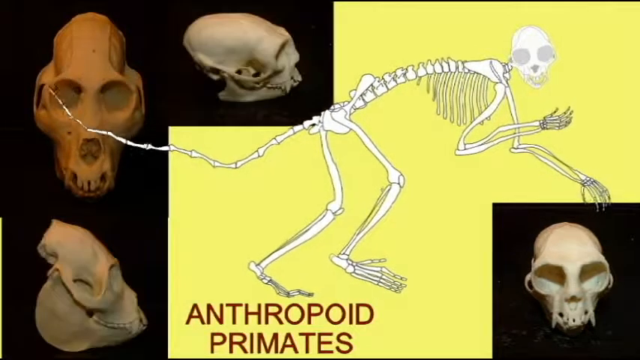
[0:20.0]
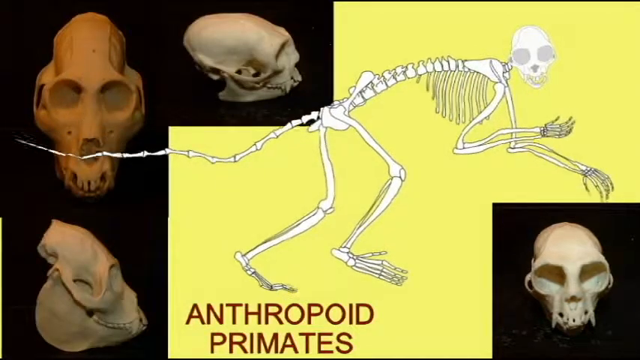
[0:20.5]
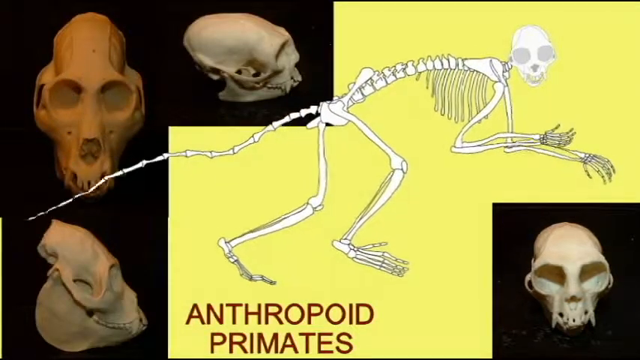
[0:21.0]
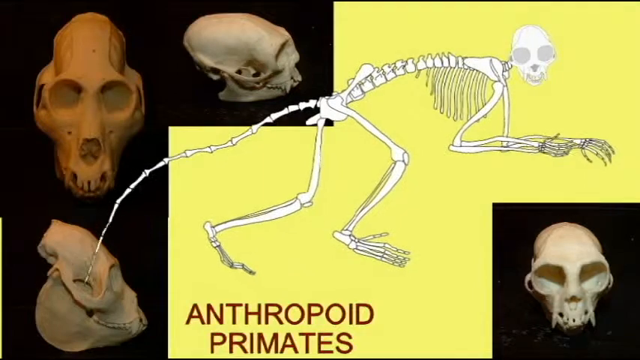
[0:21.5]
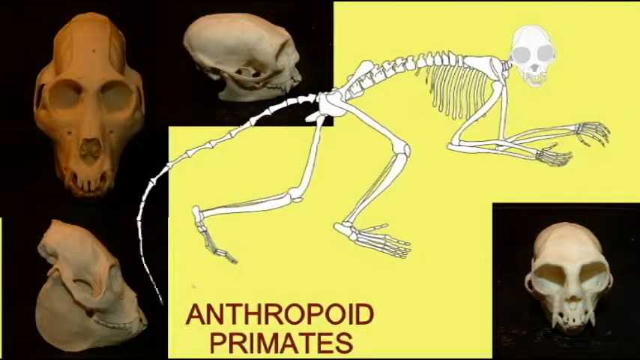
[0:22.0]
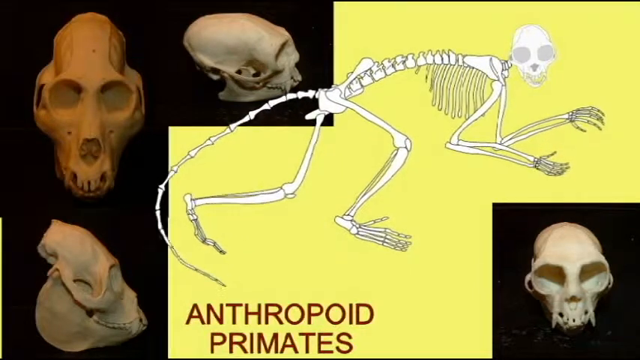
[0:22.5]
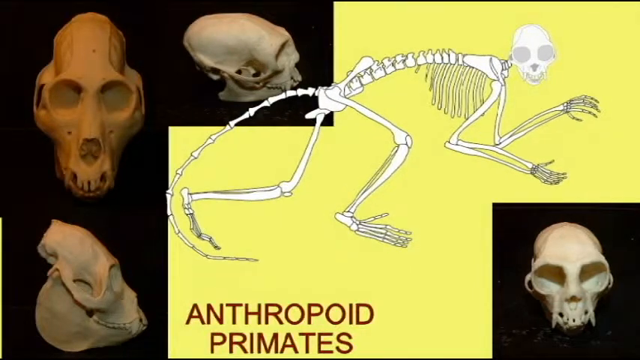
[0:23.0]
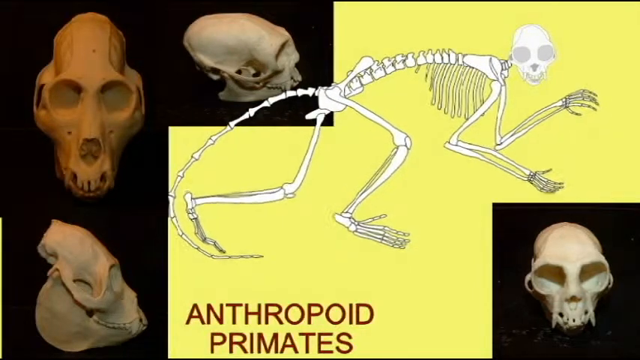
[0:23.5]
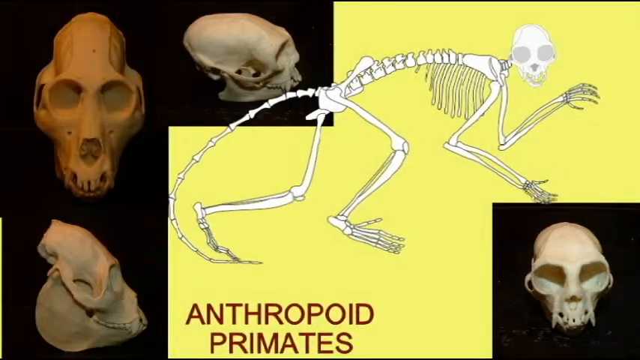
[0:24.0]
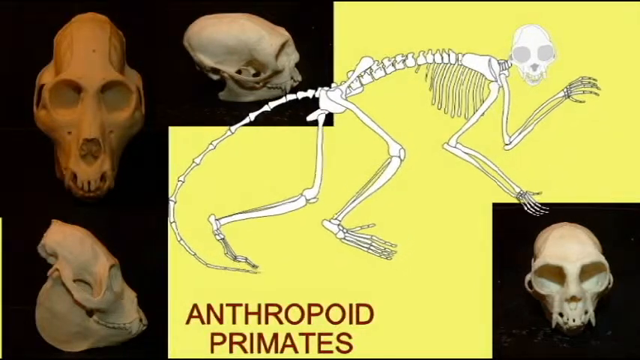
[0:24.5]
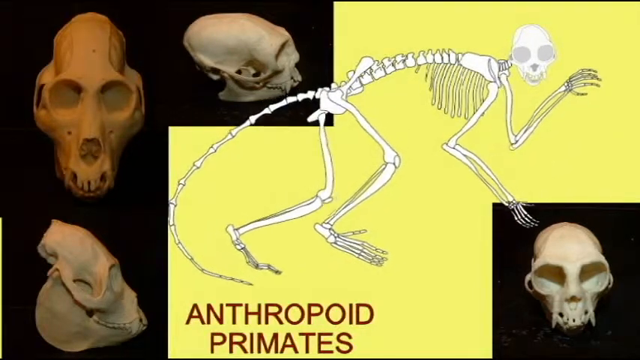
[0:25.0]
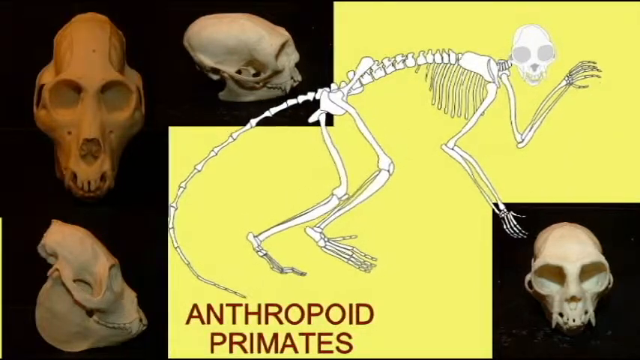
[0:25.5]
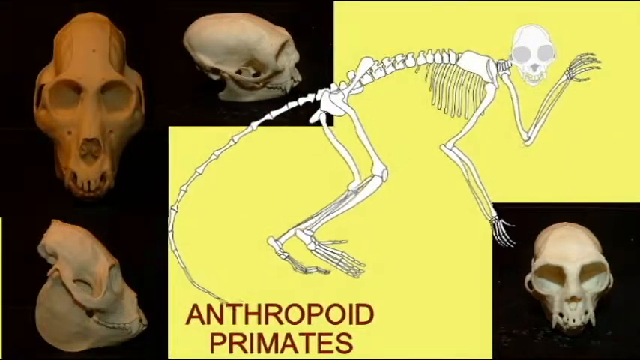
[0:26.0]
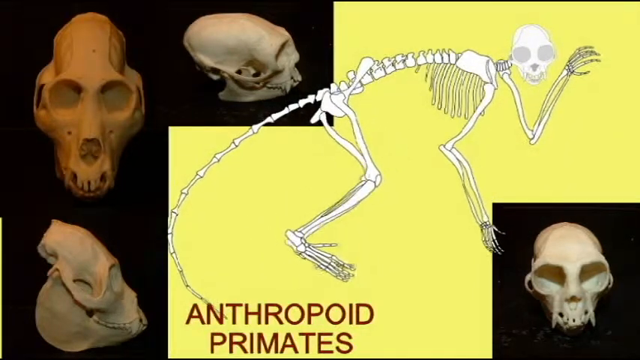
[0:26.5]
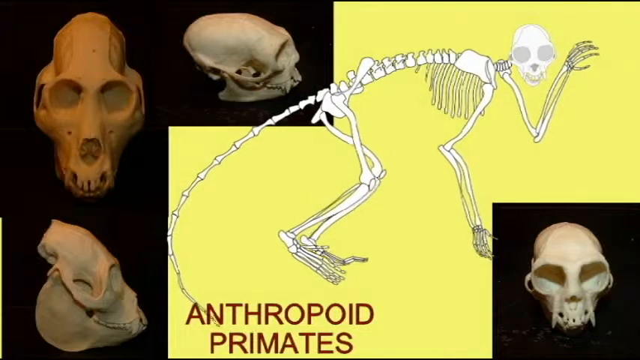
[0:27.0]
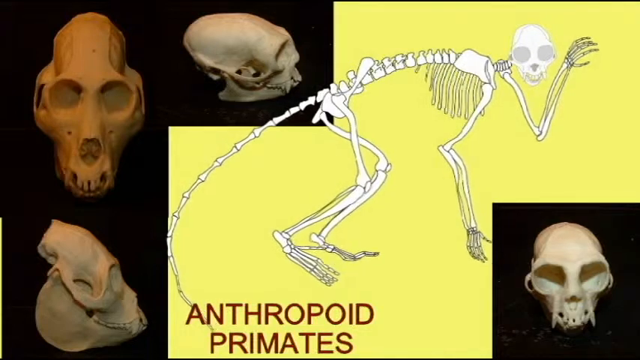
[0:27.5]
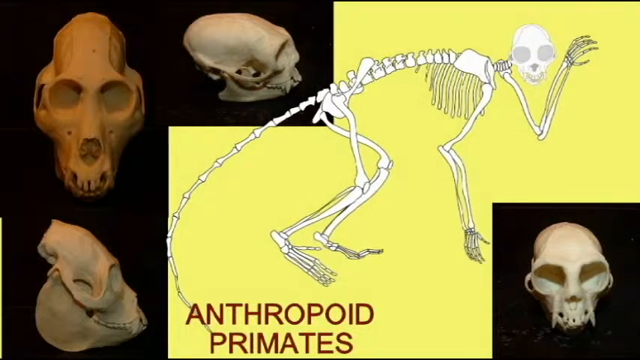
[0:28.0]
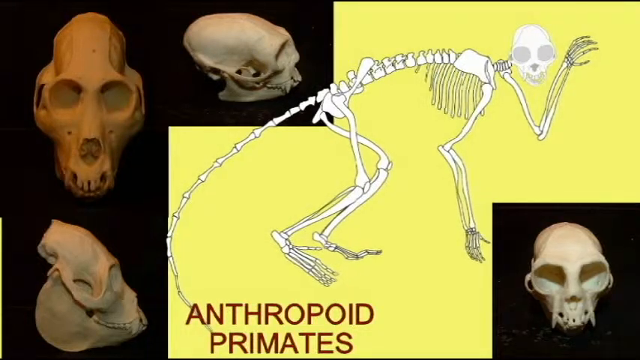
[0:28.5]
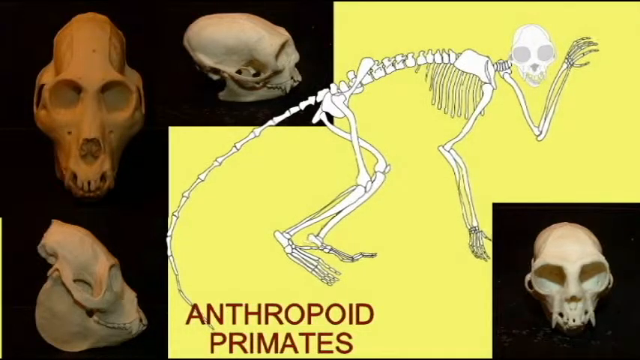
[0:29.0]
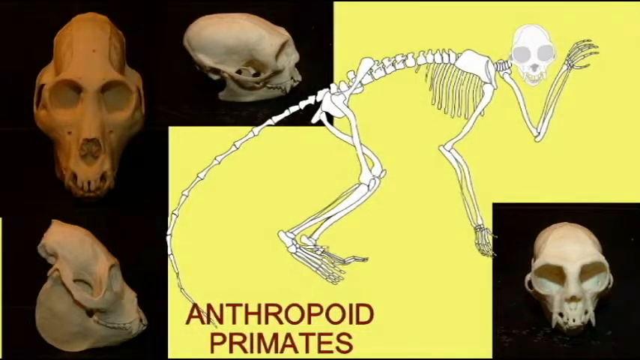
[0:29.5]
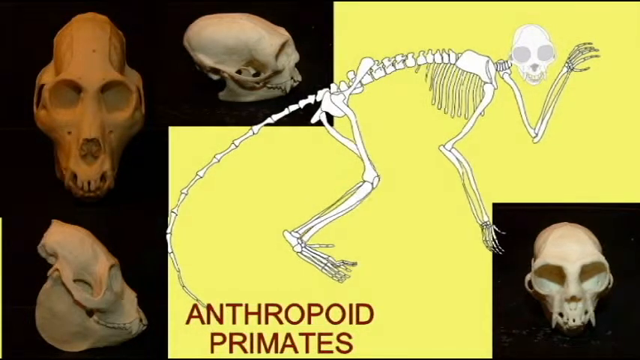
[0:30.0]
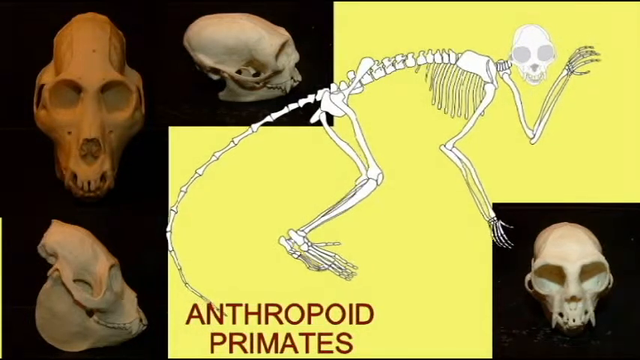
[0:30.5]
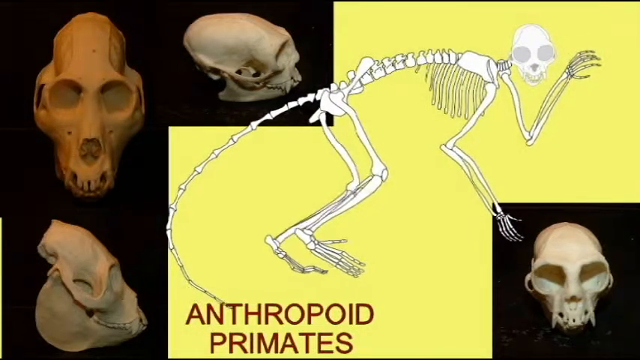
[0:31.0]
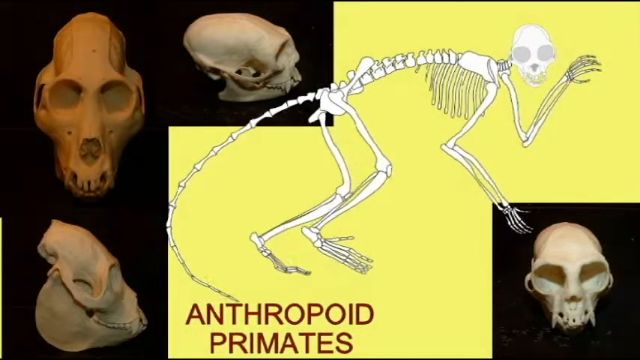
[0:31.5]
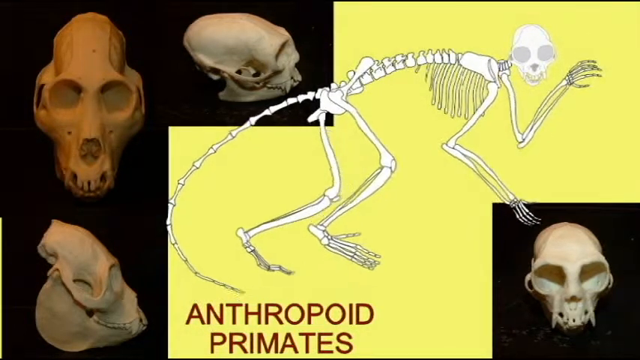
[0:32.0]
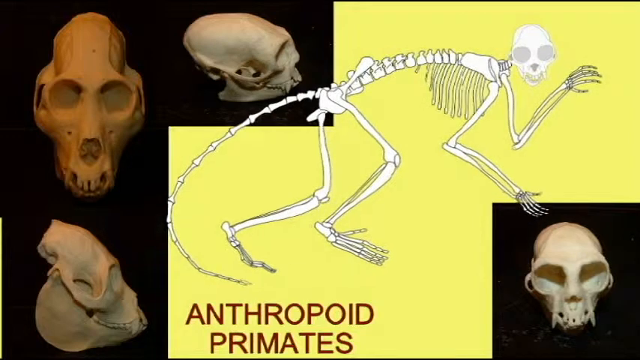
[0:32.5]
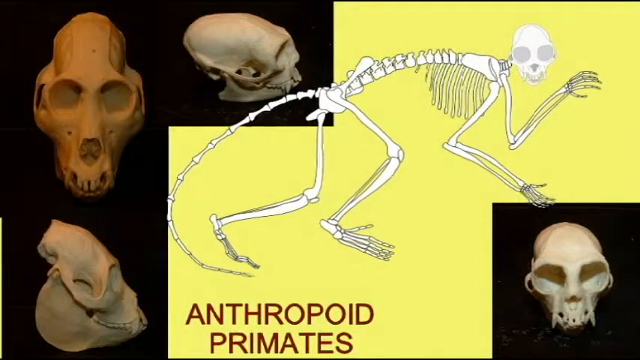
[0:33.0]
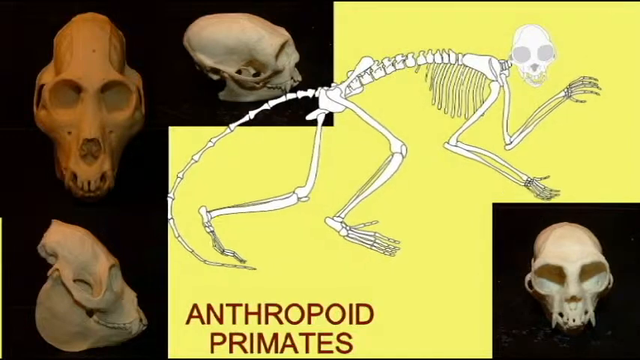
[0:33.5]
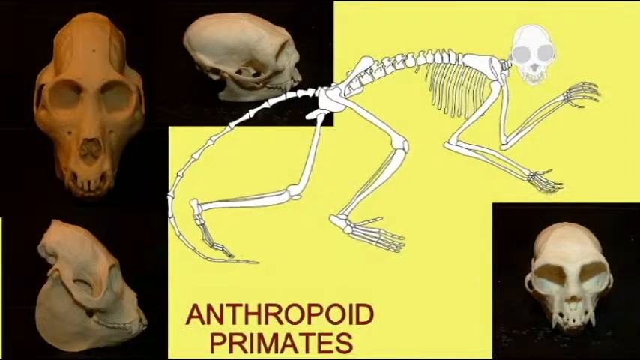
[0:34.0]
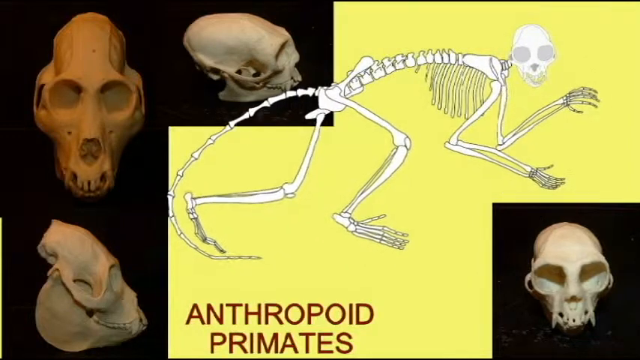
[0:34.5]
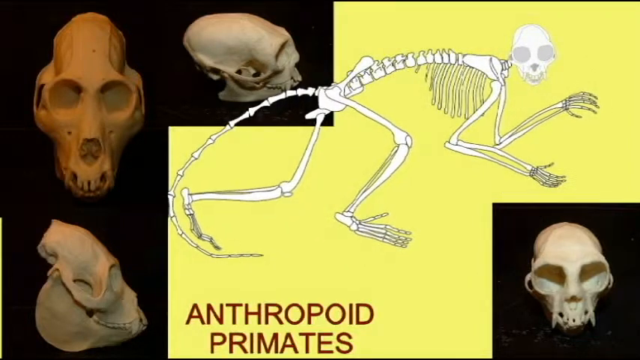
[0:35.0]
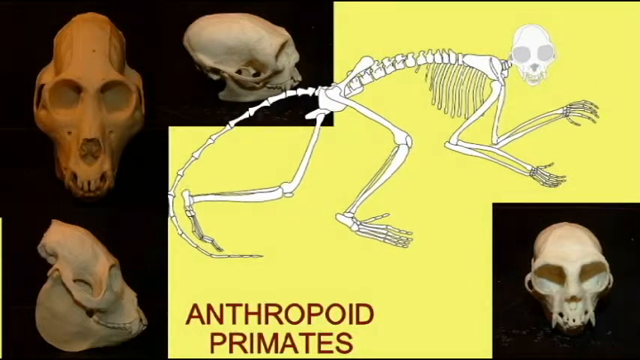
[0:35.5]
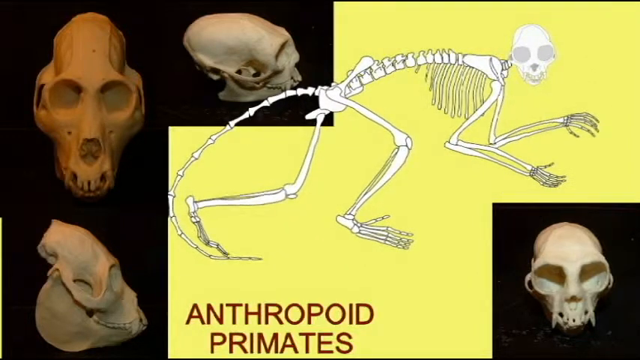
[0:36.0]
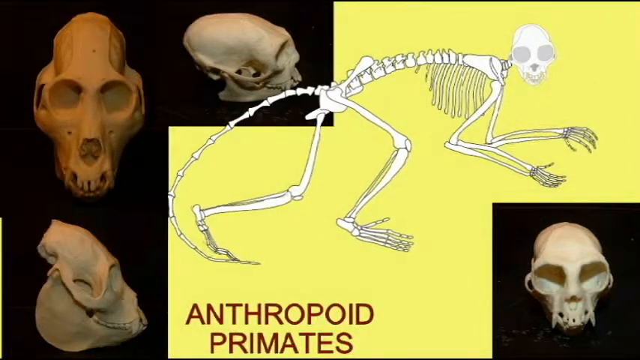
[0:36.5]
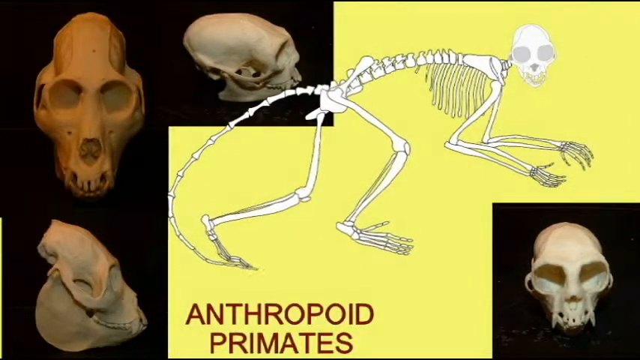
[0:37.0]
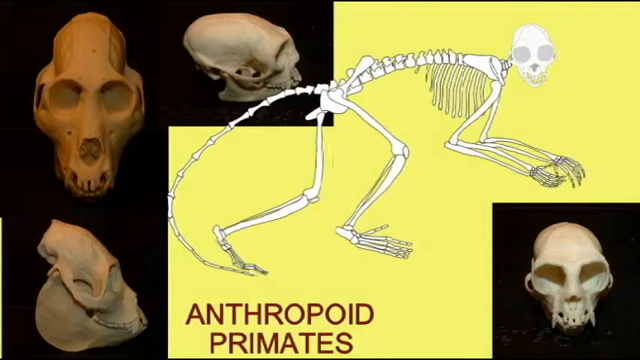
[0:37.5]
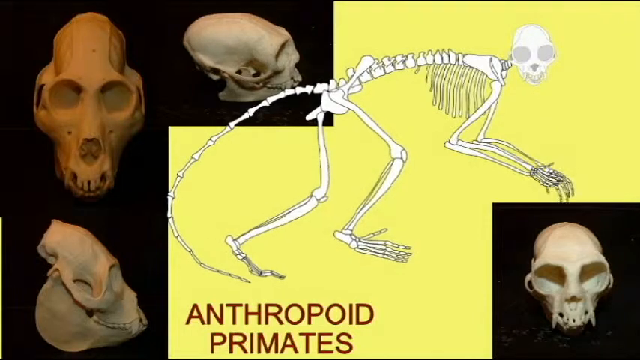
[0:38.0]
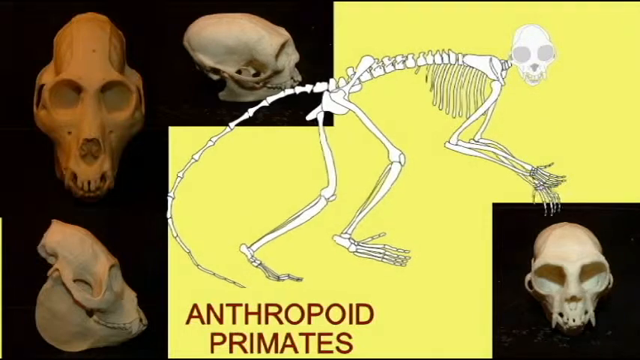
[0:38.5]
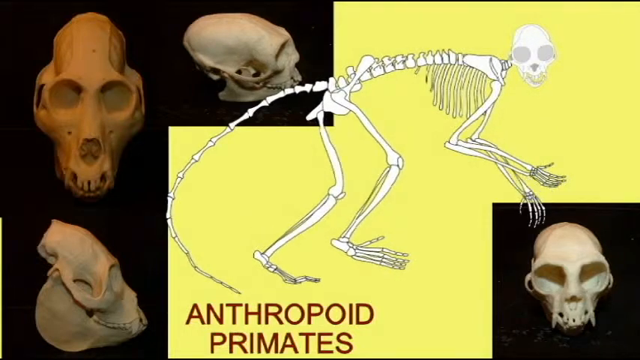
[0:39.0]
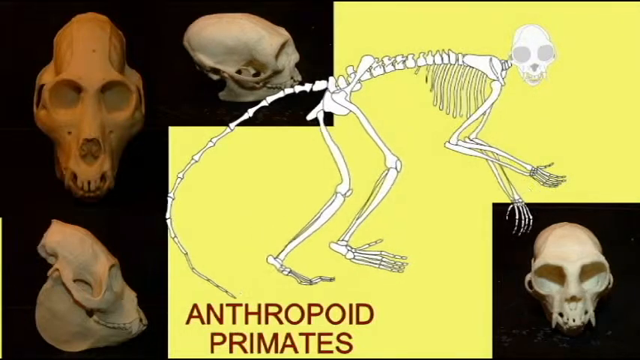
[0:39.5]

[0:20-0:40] On the yellow background with four animal skulls, the large animal skeleton in the middle continues to move its legs, arms and tail, moving up and down with its claws and legs. The text at the bottom reads "Antropod primates." The four skulls stay static, each with a black background. One is at the bottom right and looks like a smaller monkey skull. The other three are on the left-hand side of the screen, two seen from the side and one from the front. The front-facing skull seems quite a bit larger, with a larger jaw, while the side-angle skulls look smaller and have smaller jaws. The monkey skeleton in the middle keeps moving its paws, legs and tail.